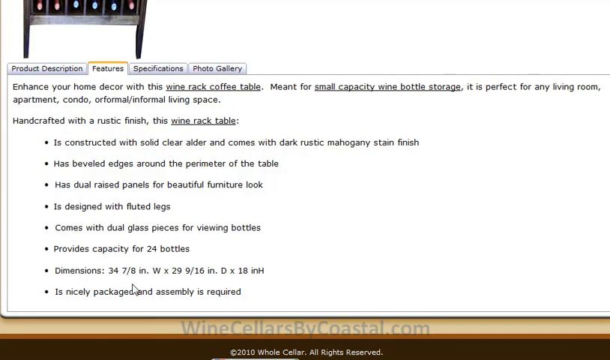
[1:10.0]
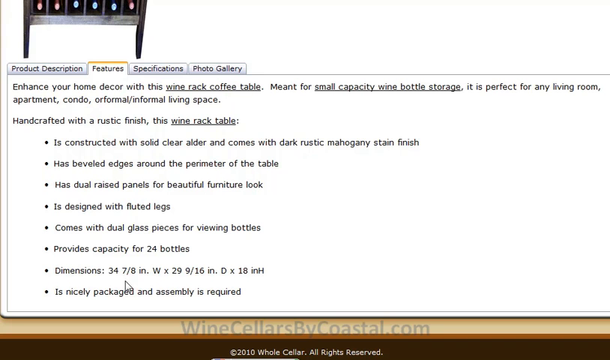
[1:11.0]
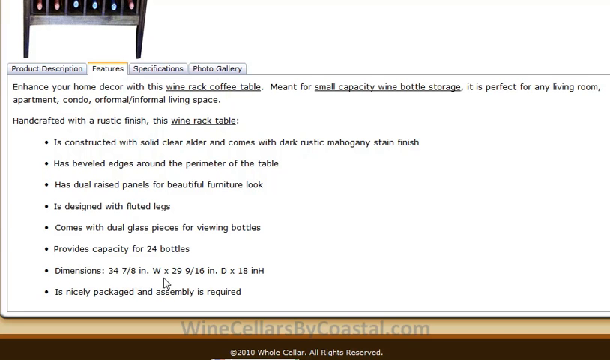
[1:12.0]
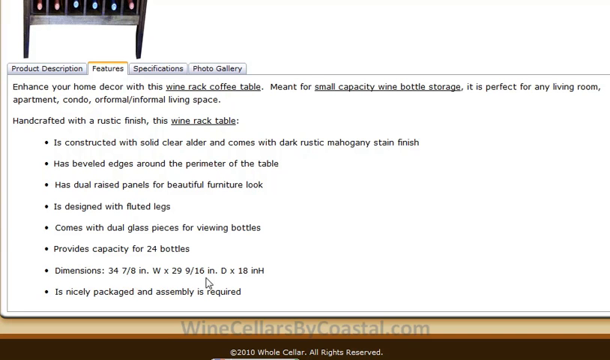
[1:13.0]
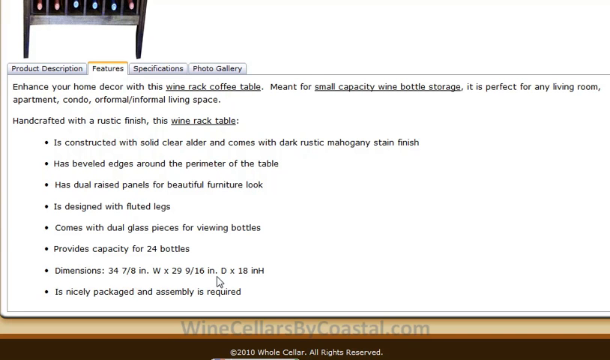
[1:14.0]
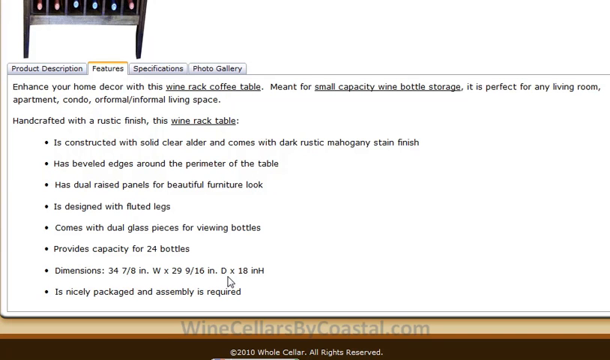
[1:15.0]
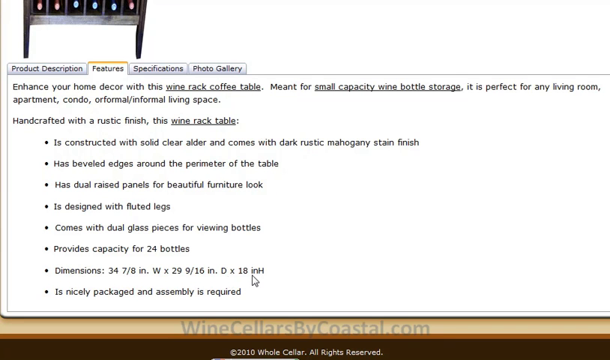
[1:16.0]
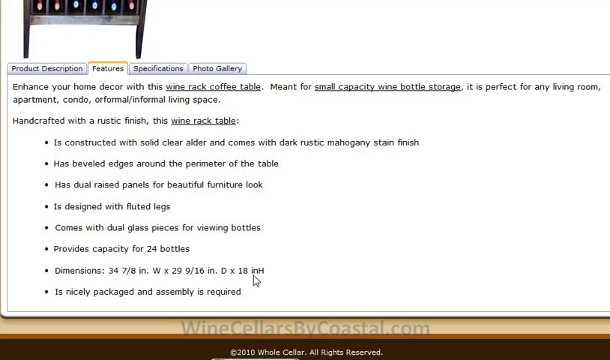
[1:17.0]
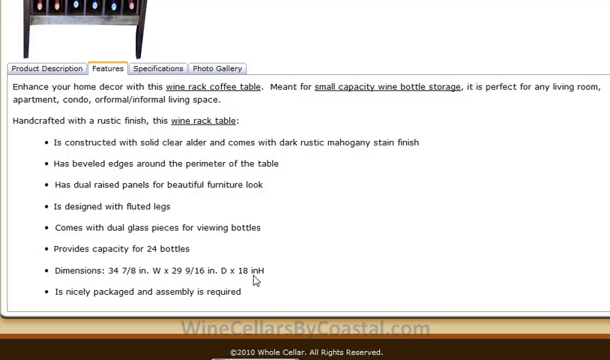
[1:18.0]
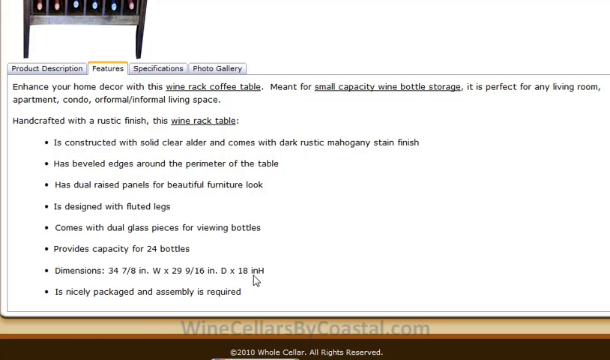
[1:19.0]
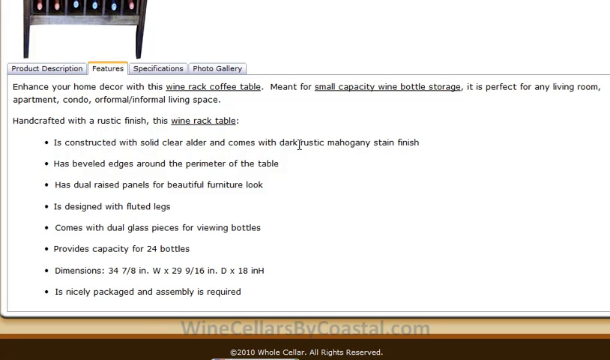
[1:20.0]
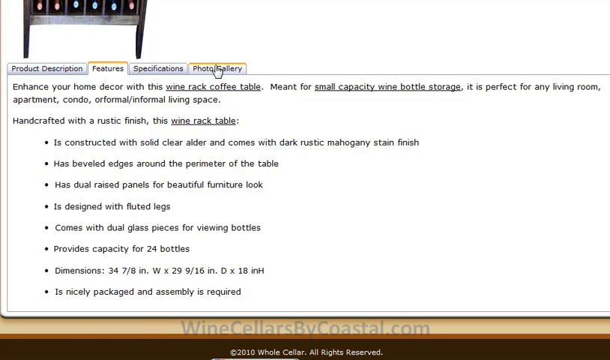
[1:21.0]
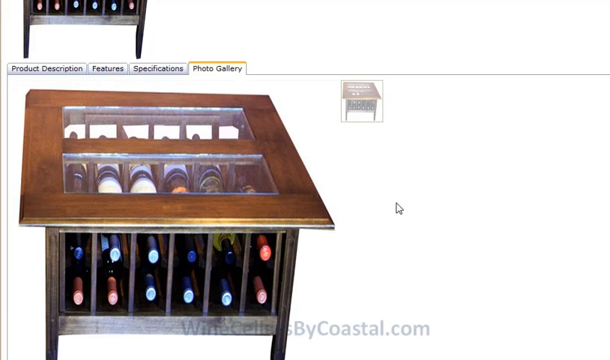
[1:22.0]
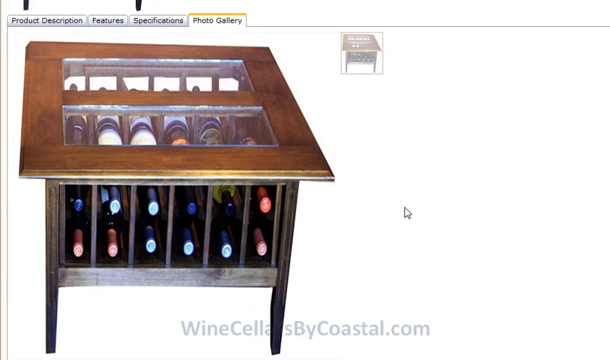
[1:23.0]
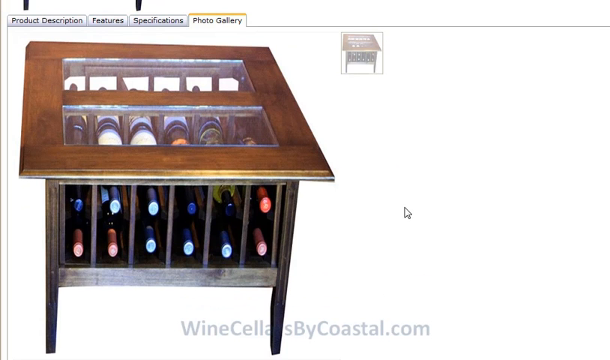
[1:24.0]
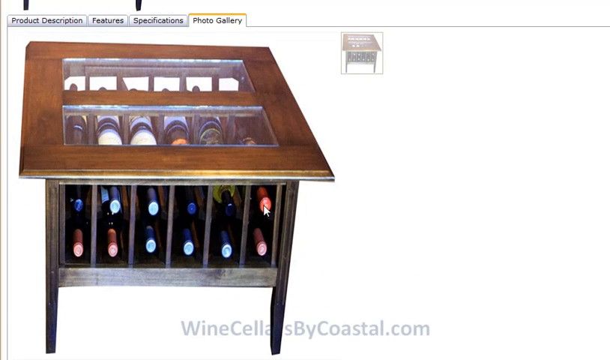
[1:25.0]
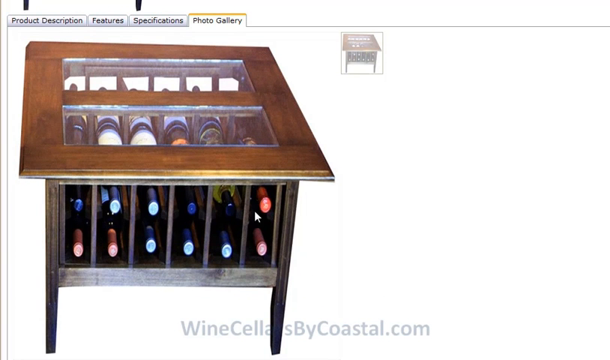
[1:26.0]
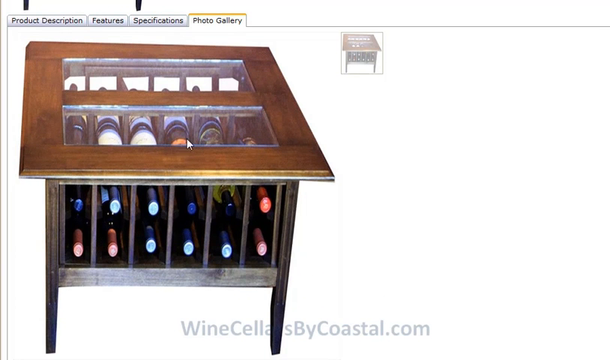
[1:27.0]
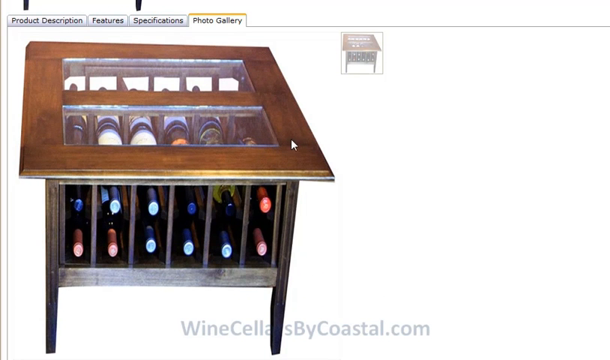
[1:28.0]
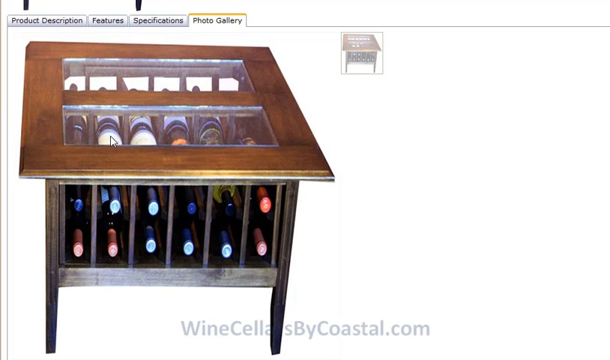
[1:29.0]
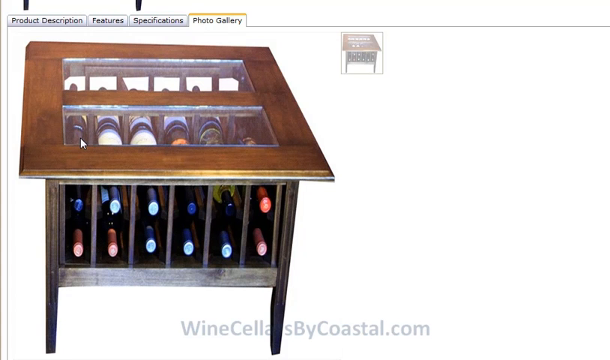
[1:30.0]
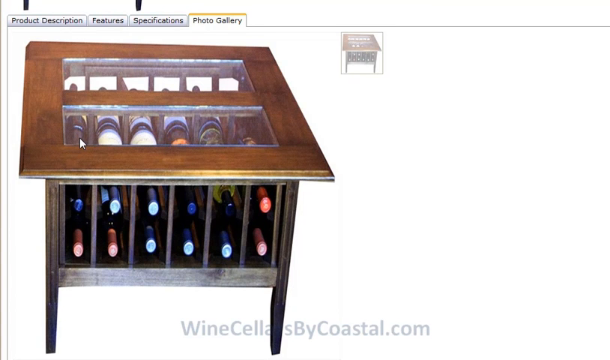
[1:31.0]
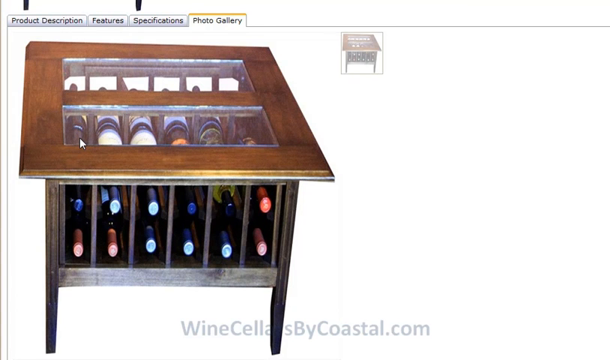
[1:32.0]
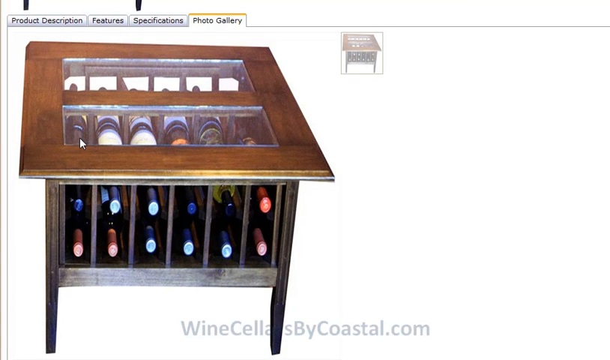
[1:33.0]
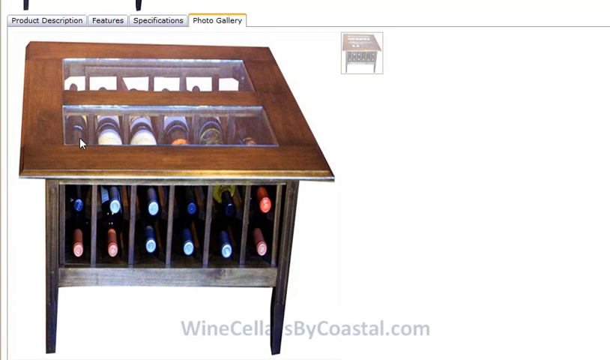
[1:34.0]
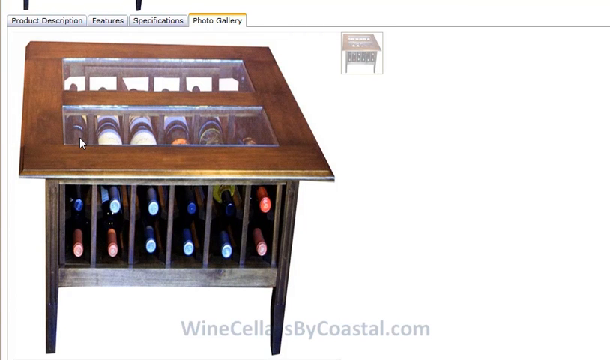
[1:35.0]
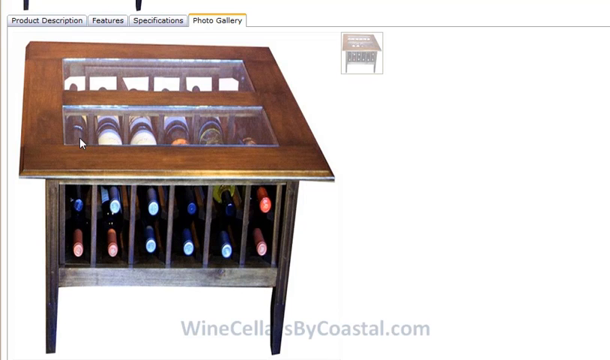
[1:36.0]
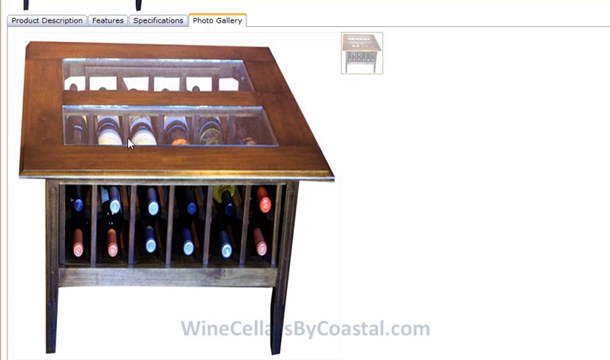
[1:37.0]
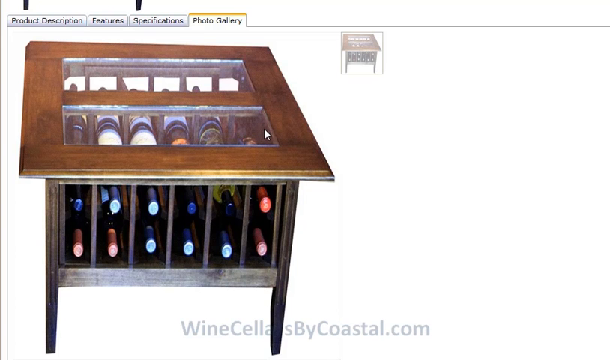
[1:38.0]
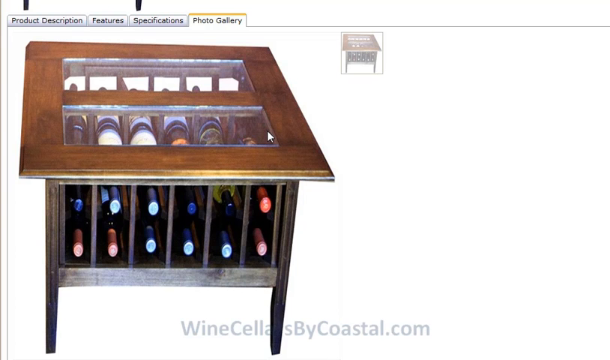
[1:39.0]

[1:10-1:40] The product page is open on the features tab, which reads: "enhance your home decor with this wine rack coffee table. Meant for small capacity wine bottle storage, it is perfect for any living room apartment condo or formal or informal living space. Handcrafted with a rustic finish, this wine rack table:" A bulleted list below reads: "is constructed with solid clear alder and comes with dark rustic mahogany stain finish", "Has beveled edges around the perimeter of the table", "Has dual raised panels for beautiful furniture look", "Is designed with fluted legs", "Comes with dual glass pieces for viewing bottles", "Provides capacity for 24 bottles", "Dimensions: 34 7/8 inches. W X 29 9/16 inches. D X 18 in H", and that it is nicely packaged and assembly is required. The cursor kind of hovers over the dimensions. The user then clicks the photo gallery tab, which shows a large image of the coffee table, and scrolls down a little to show the complete image: a brown wood rectangular coffee table with two cutout panels on top covered with glass and, underneath, a wine rack of six columns and two rows, every slot holding a wine bottle, for 12 bottles total. The user kind of hovers the mouse over the table.